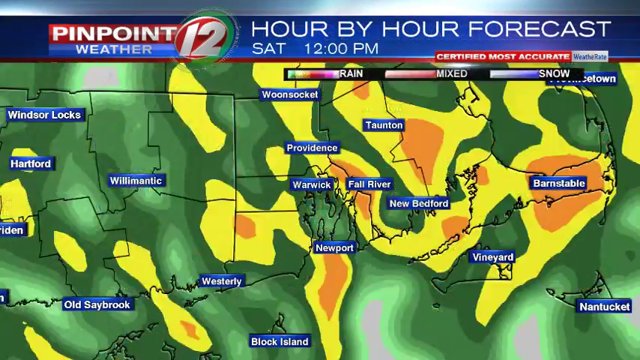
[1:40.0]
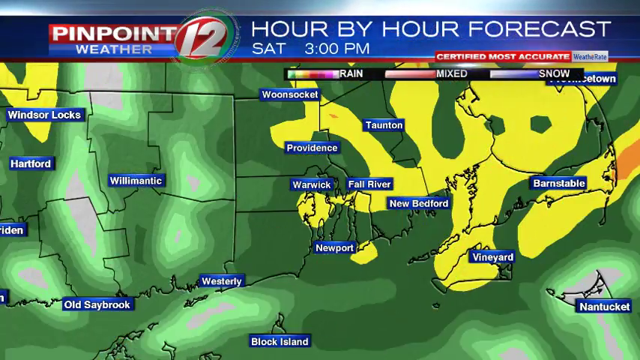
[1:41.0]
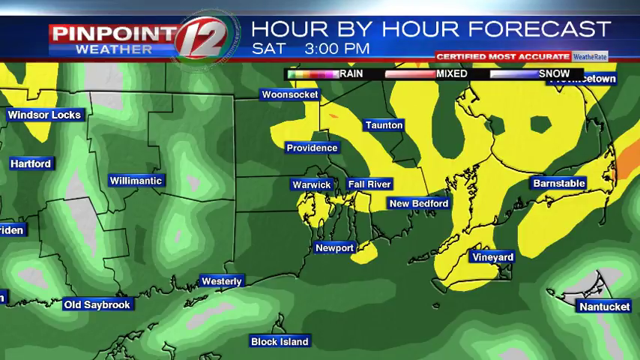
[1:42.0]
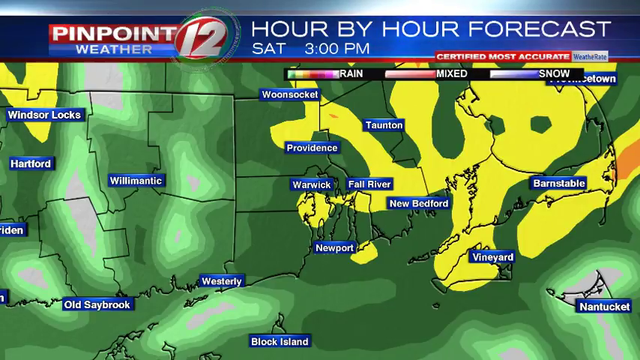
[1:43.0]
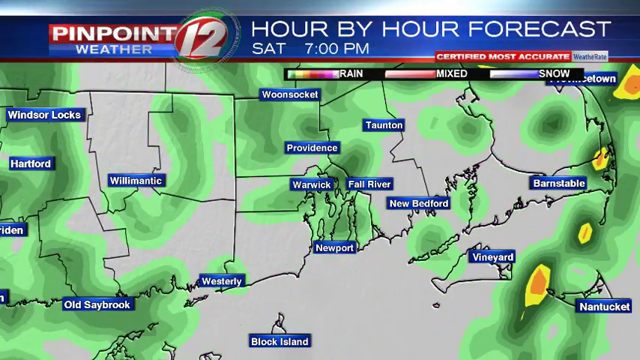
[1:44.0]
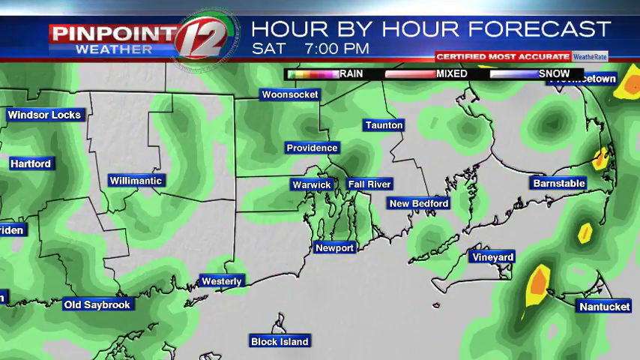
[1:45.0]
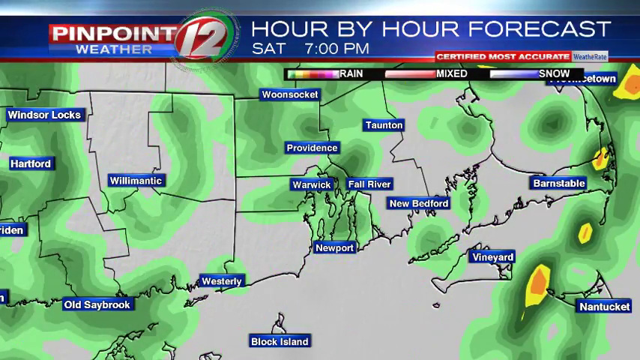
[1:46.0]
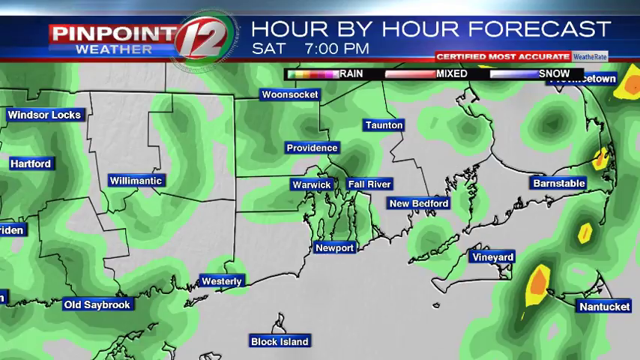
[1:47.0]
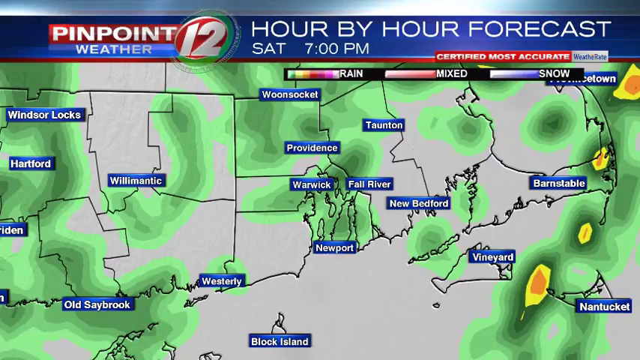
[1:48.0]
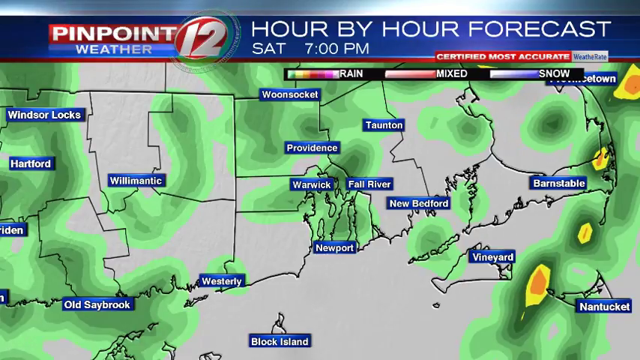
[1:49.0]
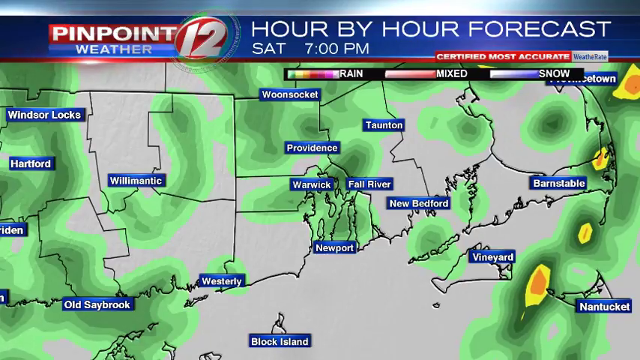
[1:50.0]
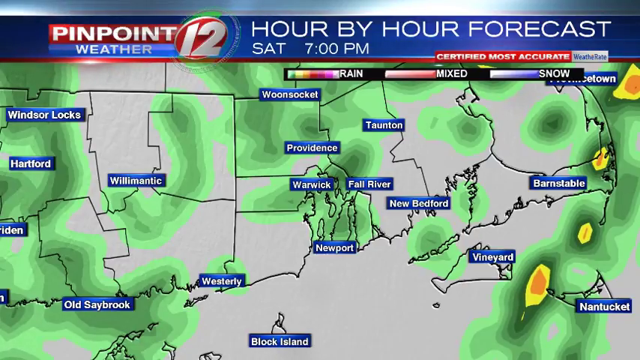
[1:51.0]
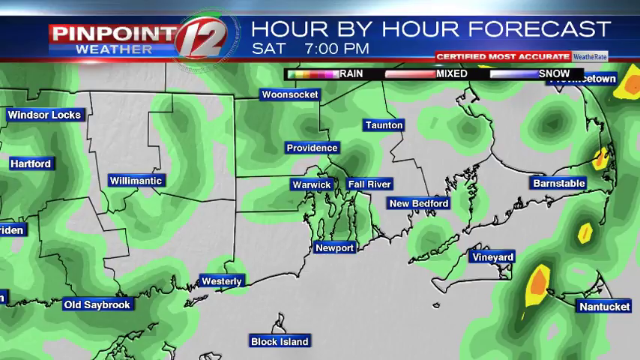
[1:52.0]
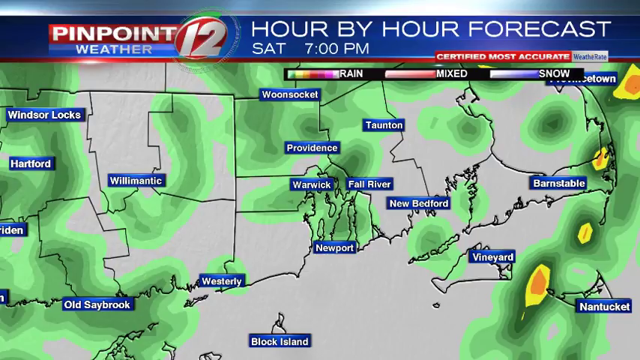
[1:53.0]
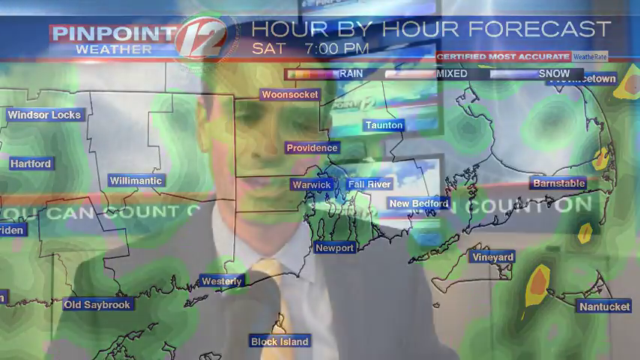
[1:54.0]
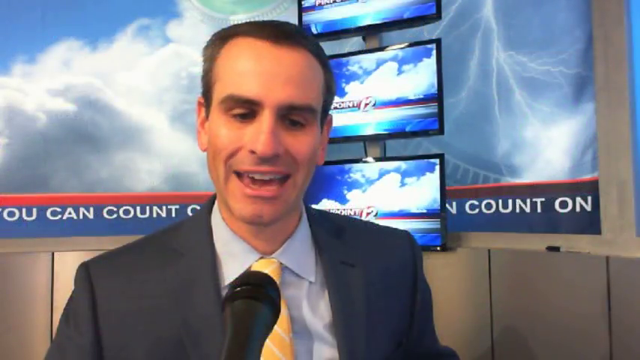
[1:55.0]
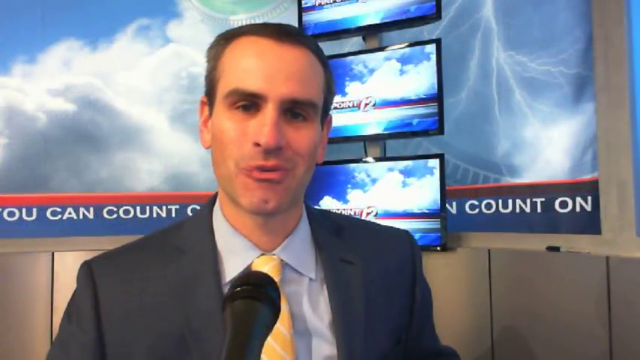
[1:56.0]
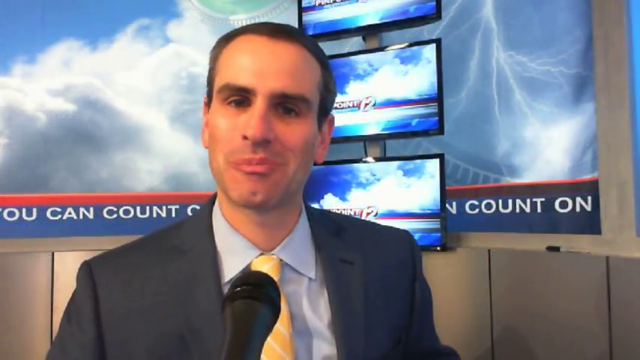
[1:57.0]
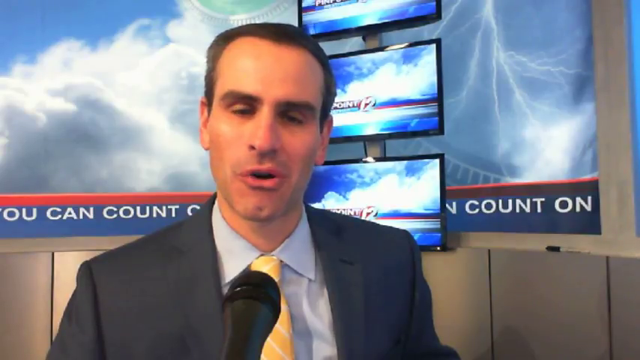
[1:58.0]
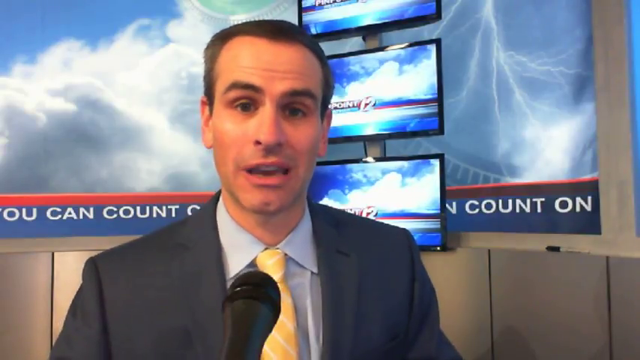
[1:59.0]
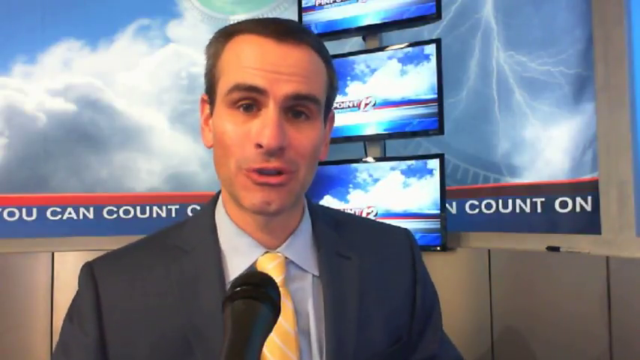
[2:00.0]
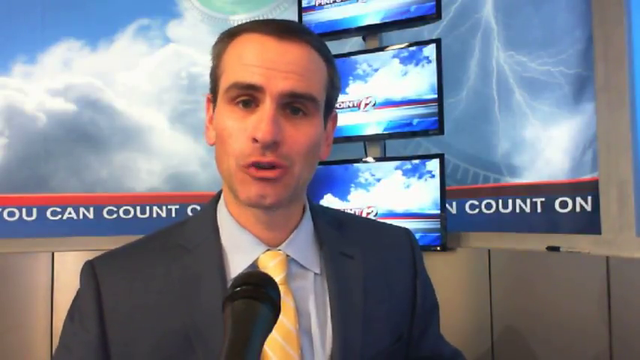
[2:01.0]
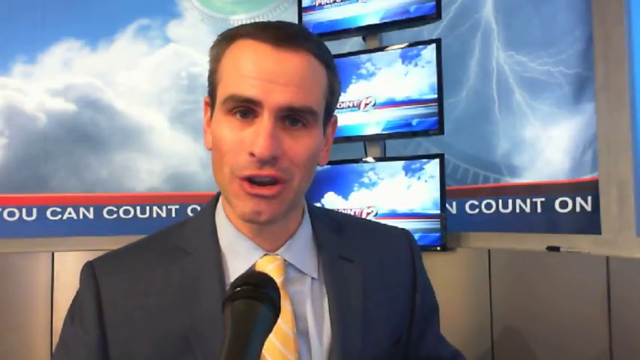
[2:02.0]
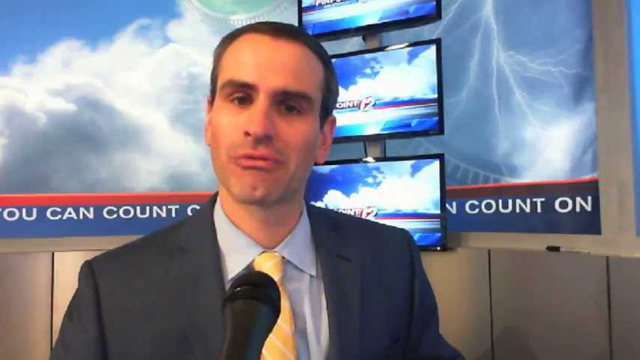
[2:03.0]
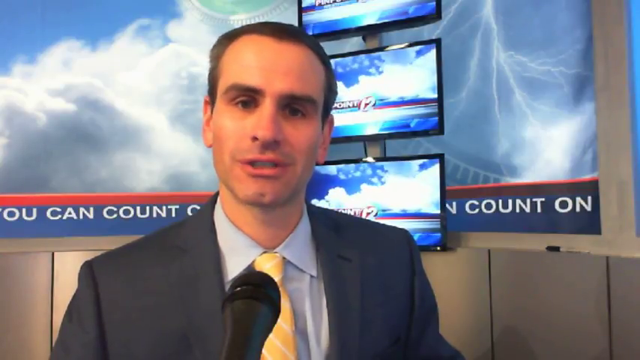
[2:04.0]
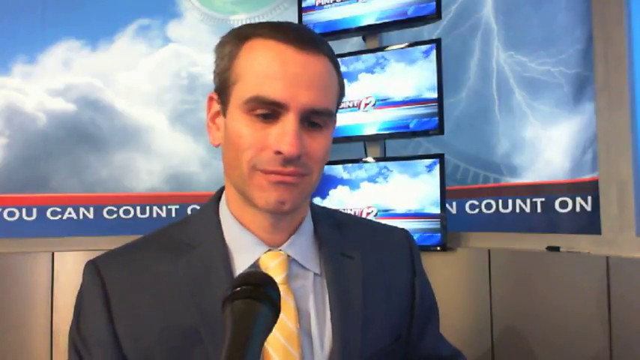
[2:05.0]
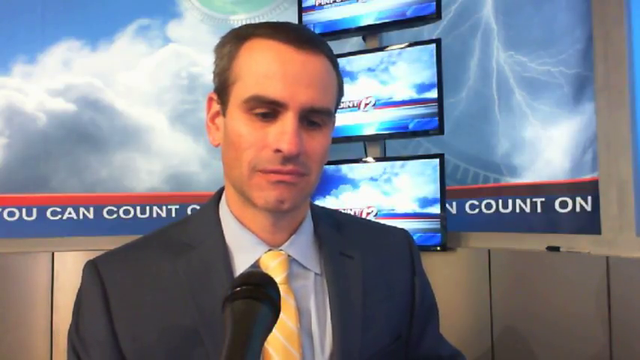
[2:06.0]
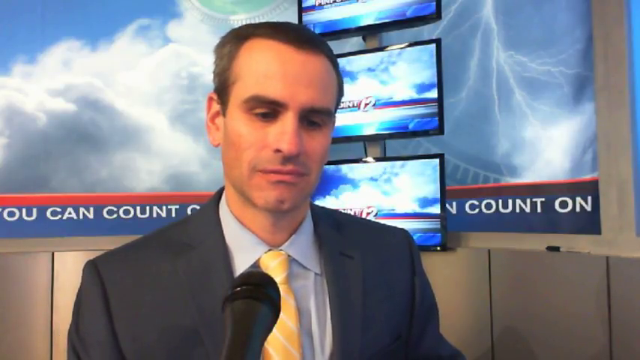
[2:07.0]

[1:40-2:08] A map of the southern half of New England appears on a green background, showing most of Massachusetts, Cape Cod, Nantucket, Martha's Vineyard, Rhode Island, and Connecticut, with numerous towns labeled in blue. A top chyron reads "pinpoint weather 12, hour by hour forecast Saturday, 12 p.m." Below it, a bar indicates rain, mixed precipitation, and snow, with different colors standing for the different forms of precipitation. Large areas of yellow, some with orange centers, move across the region from west to east, and then things begin to clear out from south to north. The green areas diminish, leaving mostly gray by Saturday at 7 p.m. The video then returns to the newscaster, seated at a table and seen from the chest up, wearing a dark gray suit, a white shirt, and a yellow tie. Behind him, screens show cumulus clouds on the left and lightning on the right. He speaks to the camera; he has dark, deep-set eyes, a receding hairline, dark hair, and a dimple in his chin.